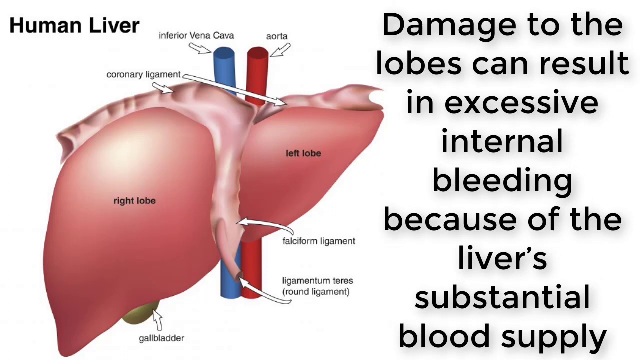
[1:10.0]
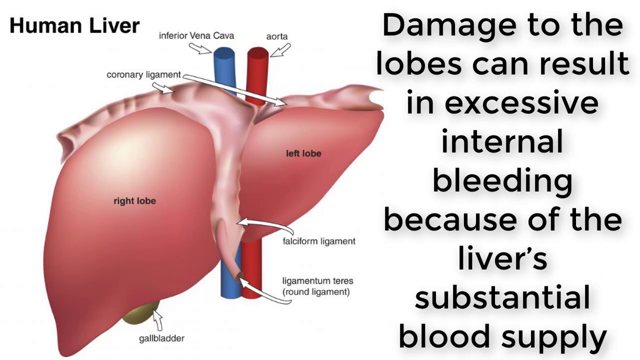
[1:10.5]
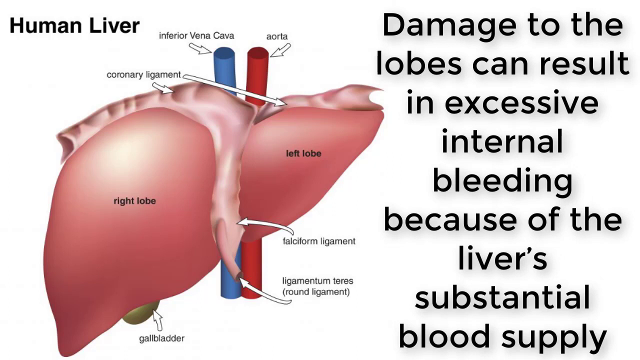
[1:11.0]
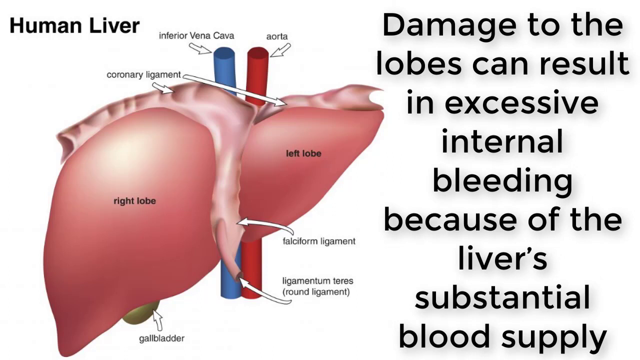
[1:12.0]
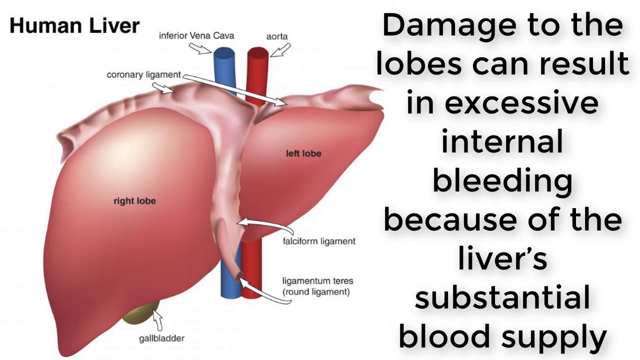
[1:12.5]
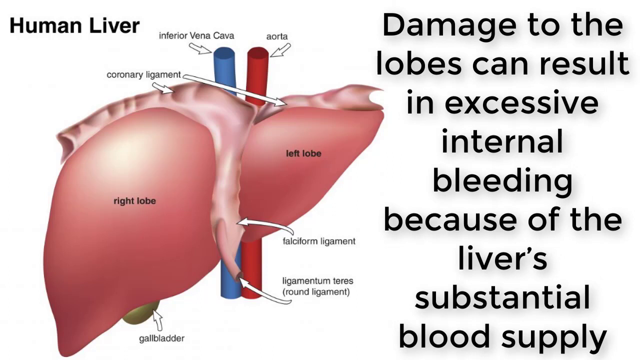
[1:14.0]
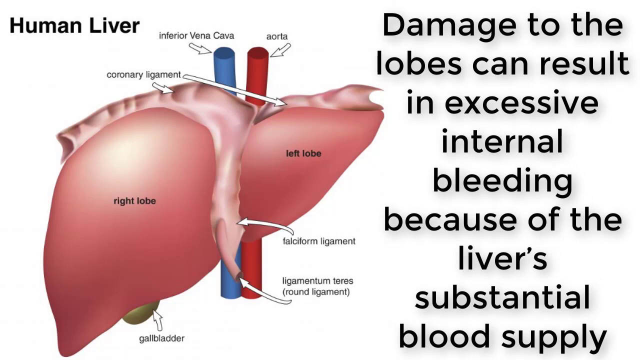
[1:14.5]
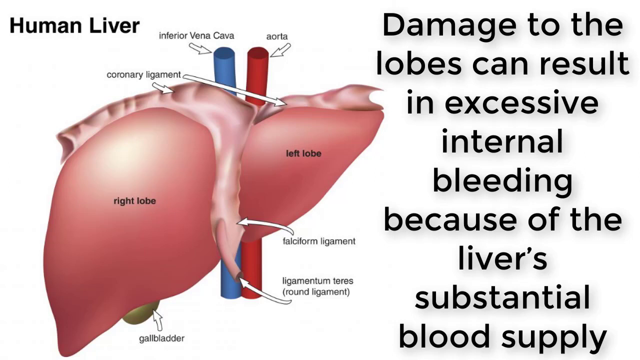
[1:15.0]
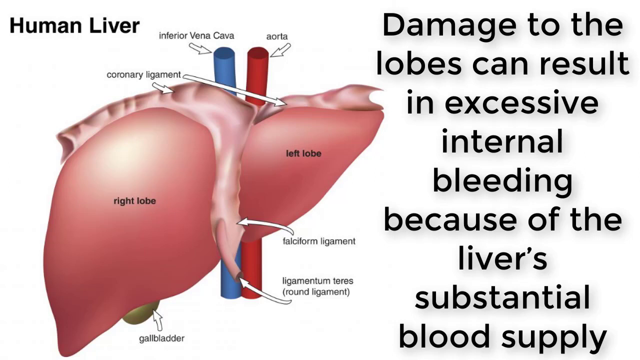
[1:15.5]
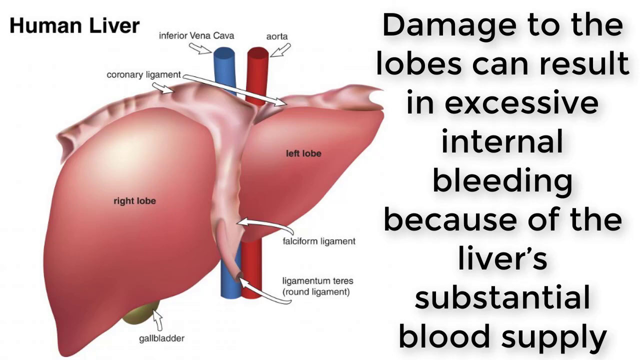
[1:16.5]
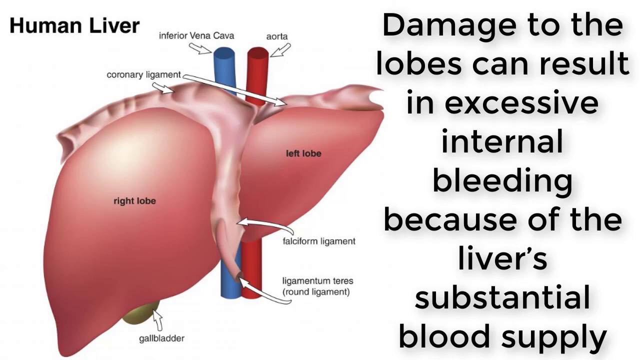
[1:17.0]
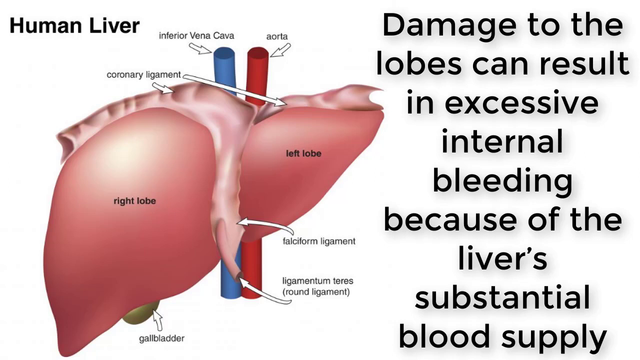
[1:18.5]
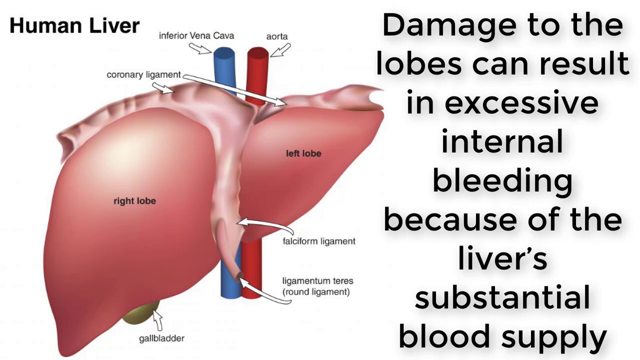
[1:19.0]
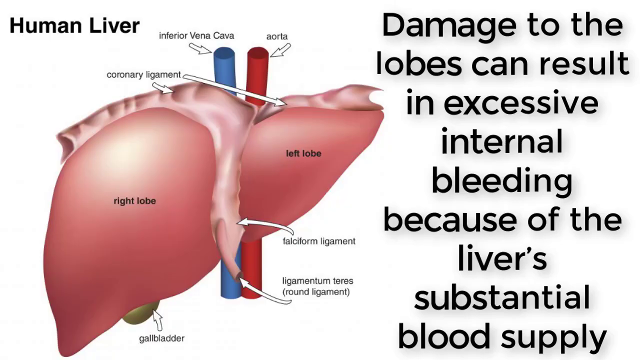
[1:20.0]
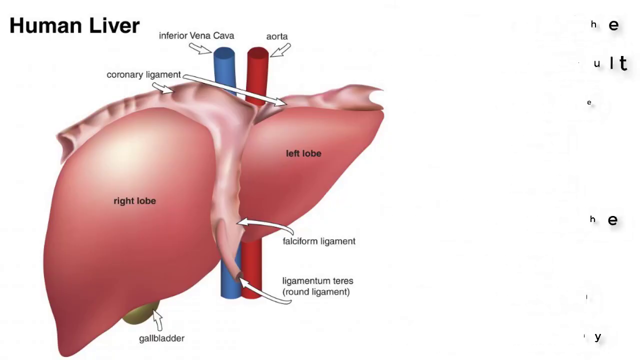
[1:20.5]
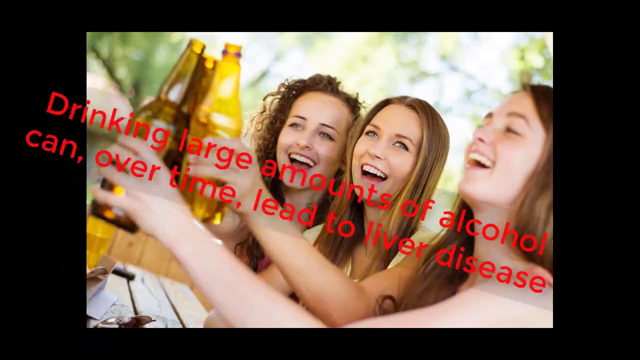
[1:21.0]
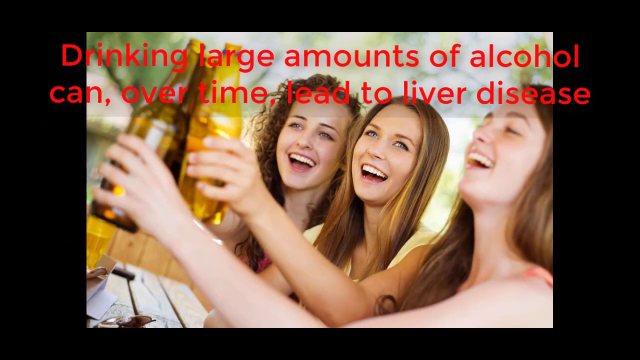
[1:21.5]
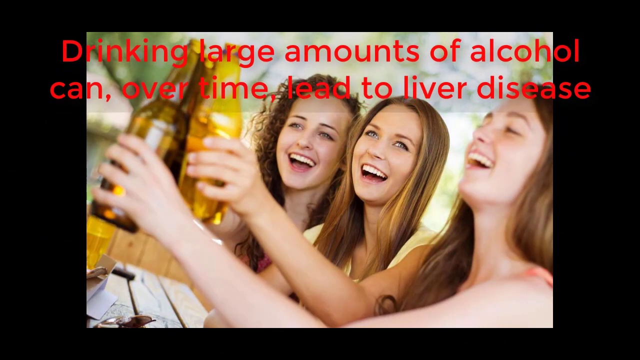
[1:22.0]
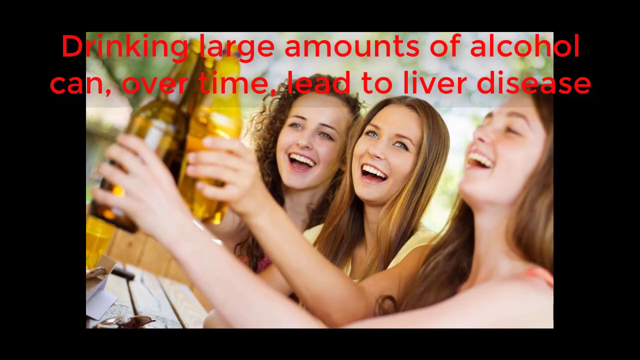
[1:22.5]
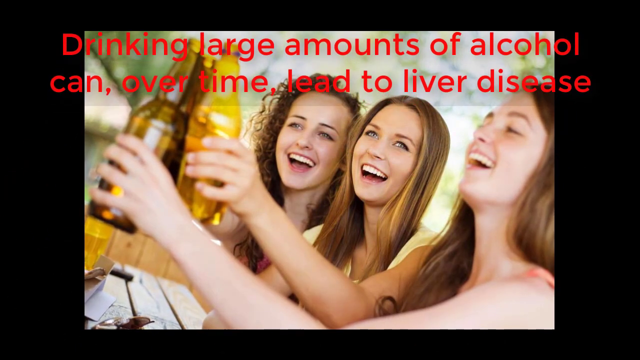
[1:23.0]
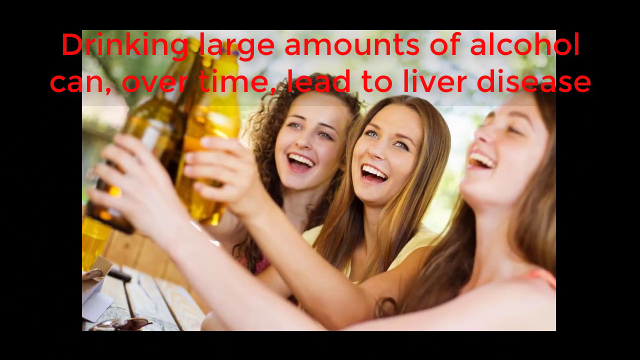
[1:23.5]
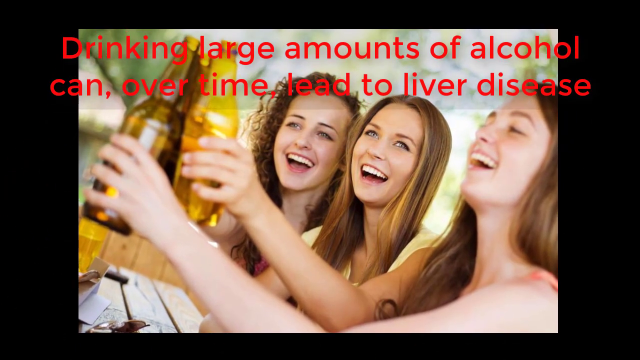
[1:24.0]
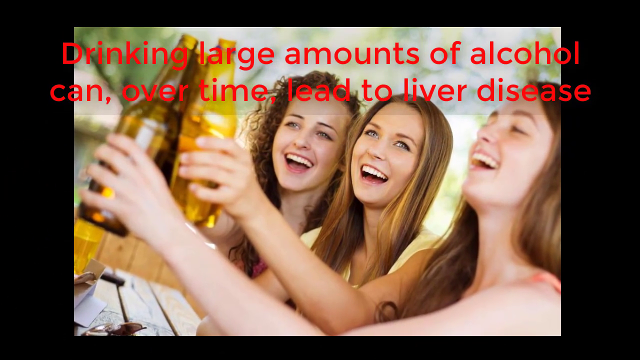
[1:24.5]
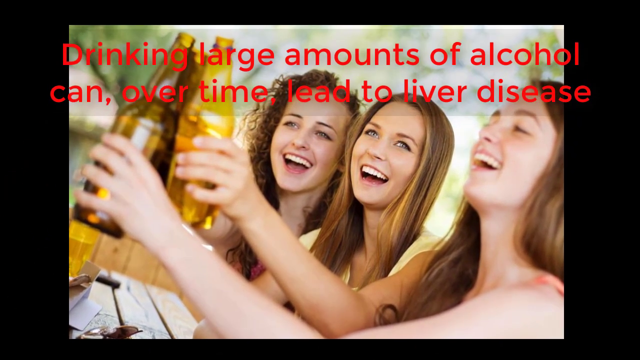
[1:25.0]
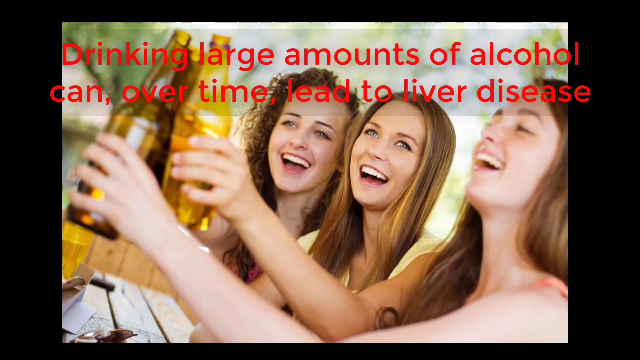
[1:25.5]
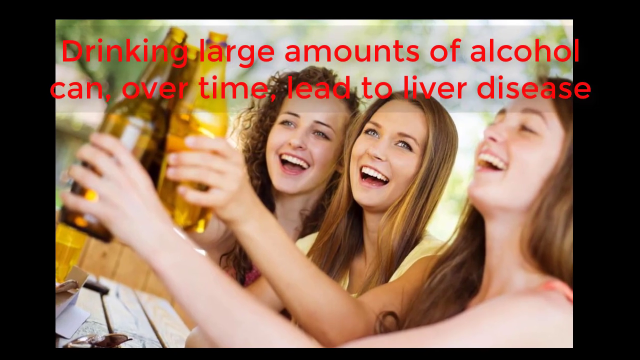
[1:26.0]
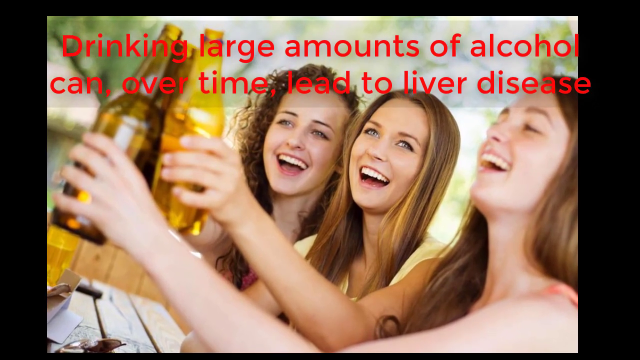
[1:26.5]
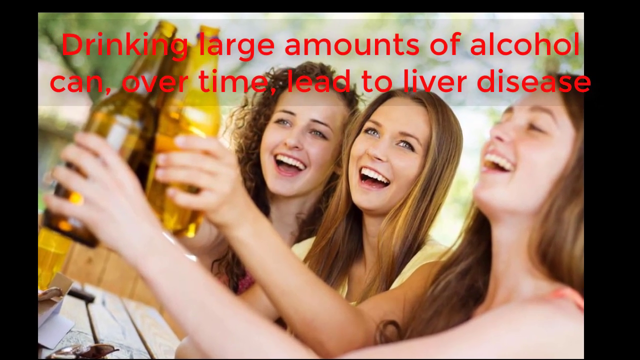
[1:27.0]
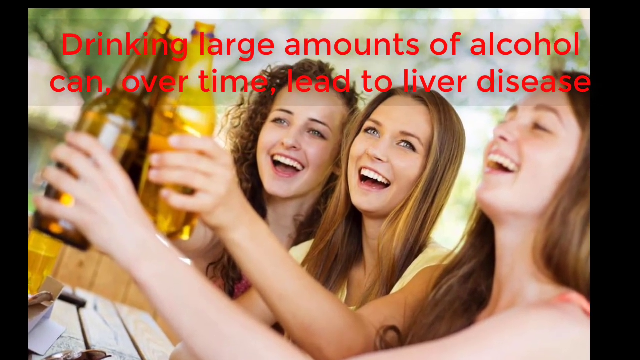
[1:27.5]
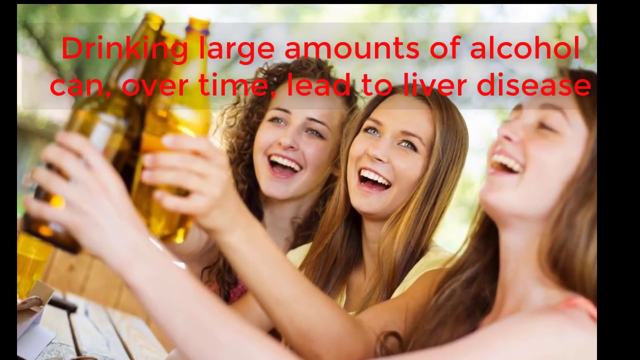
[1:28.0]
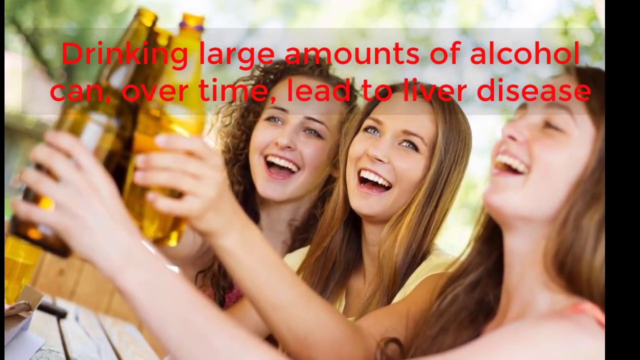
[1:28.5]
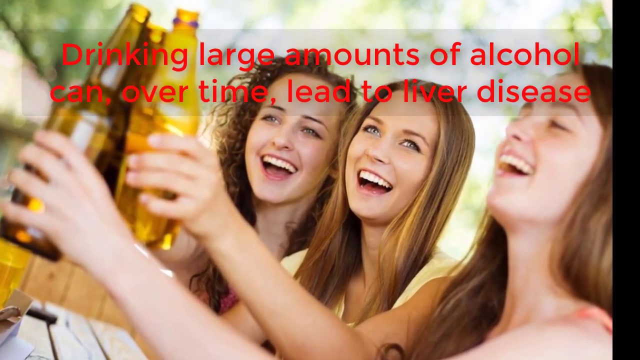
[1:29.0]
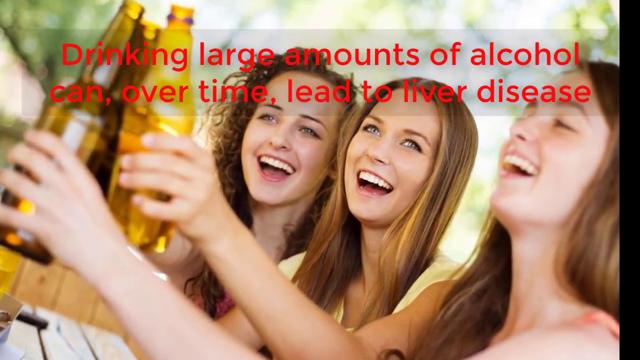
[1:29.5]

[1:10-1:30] A picture of a liver is shown with a lot of red or black text and black labels pointing to different parts. At the top left it says "human liver". An arrow points to what looks like a blue vein labeled "anterior vena cava", and on the right a red vein is labeled "aorta". Underneath that, an arrow pointing to the top of the liver is labeled "coronary ligament". A black label on the left side says "right lobe", and one on the right side says "left lobe". On the right of the screen, text reads "damage to the lobes can result in excessive internal bleeding because of the liver's substantial blood supply." Below the liver, another arrow points to a green part labeled "gallbladder".